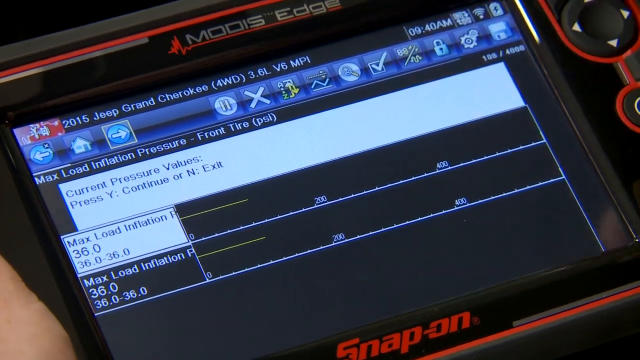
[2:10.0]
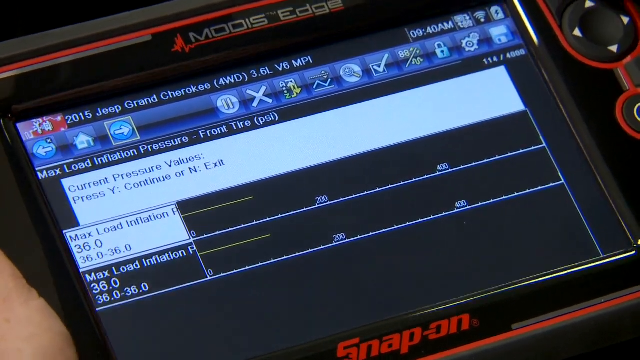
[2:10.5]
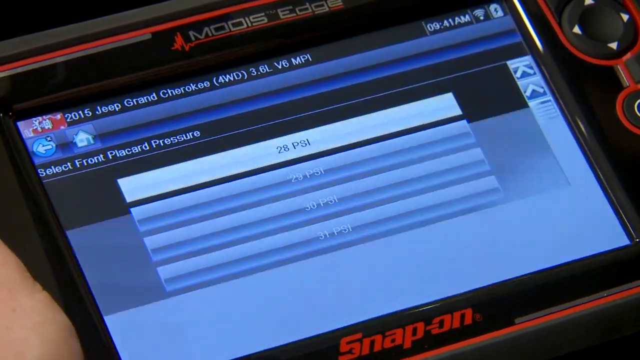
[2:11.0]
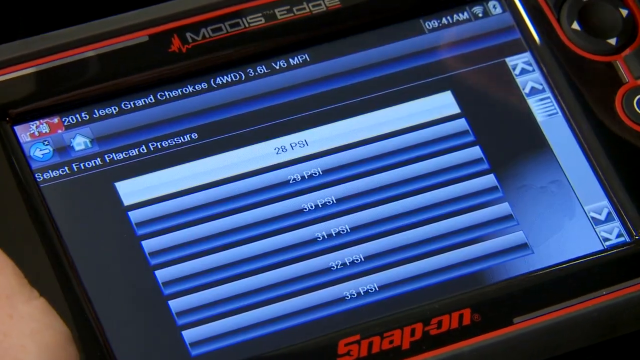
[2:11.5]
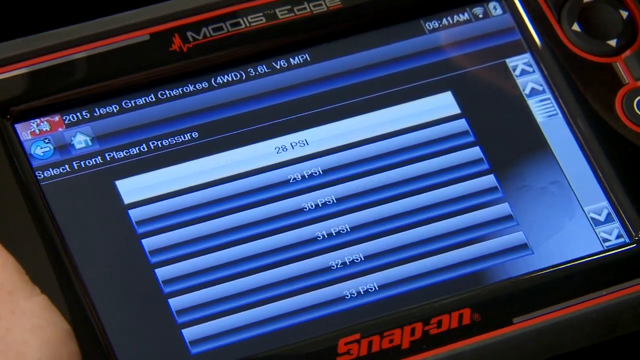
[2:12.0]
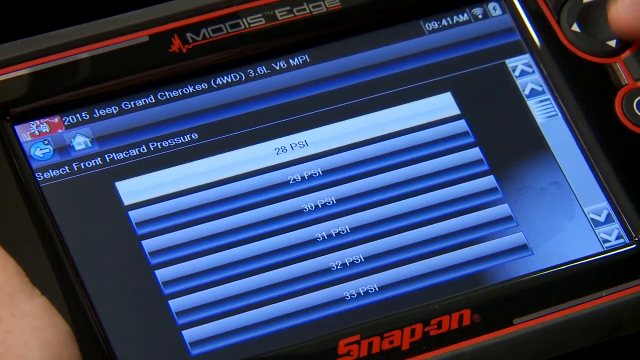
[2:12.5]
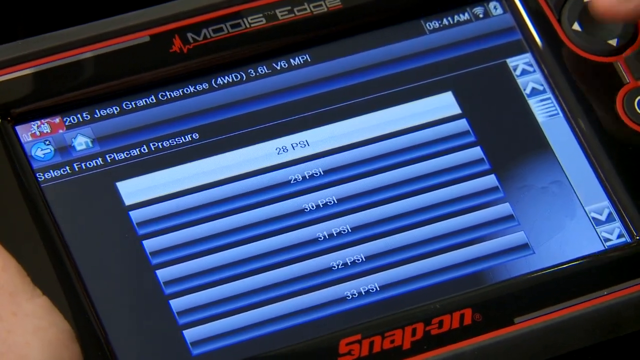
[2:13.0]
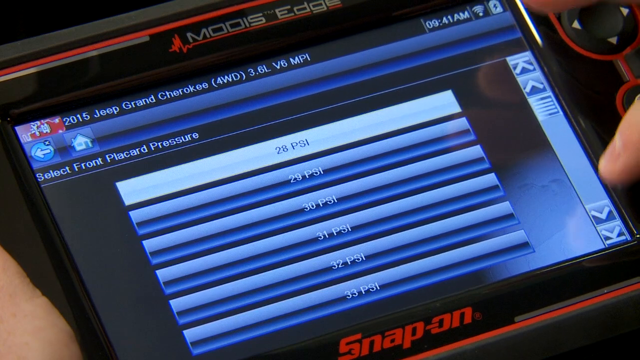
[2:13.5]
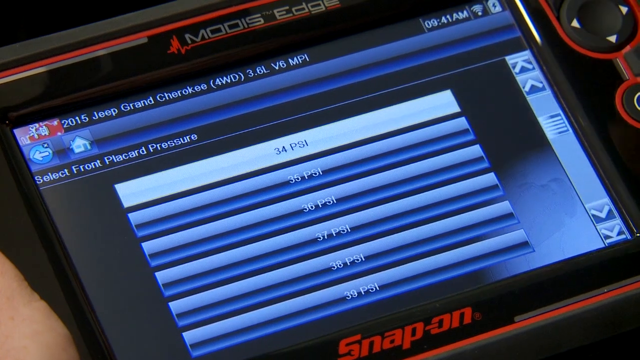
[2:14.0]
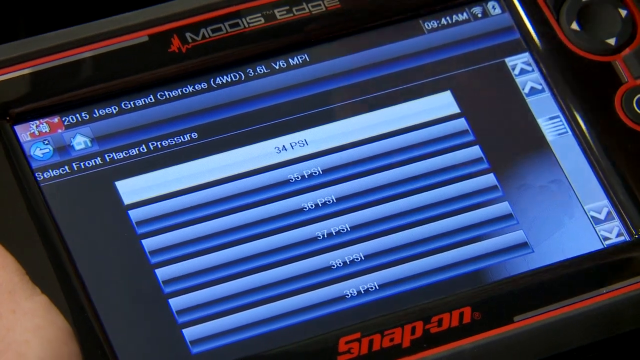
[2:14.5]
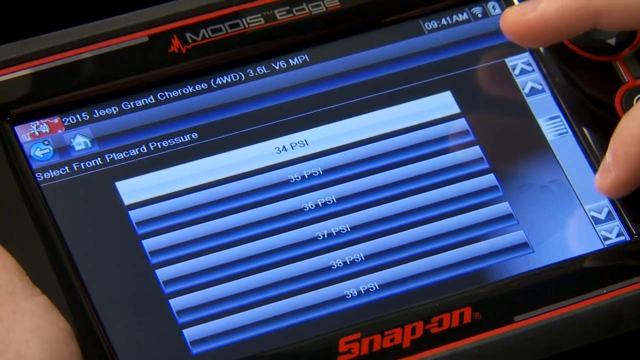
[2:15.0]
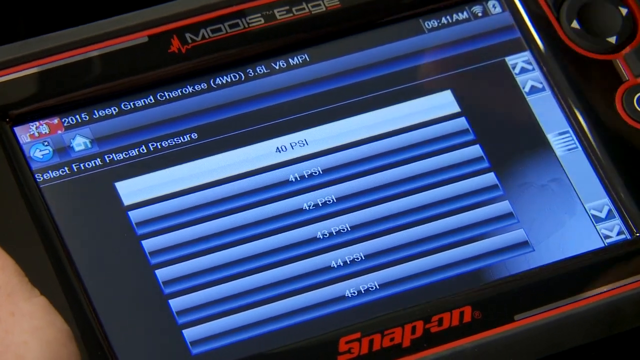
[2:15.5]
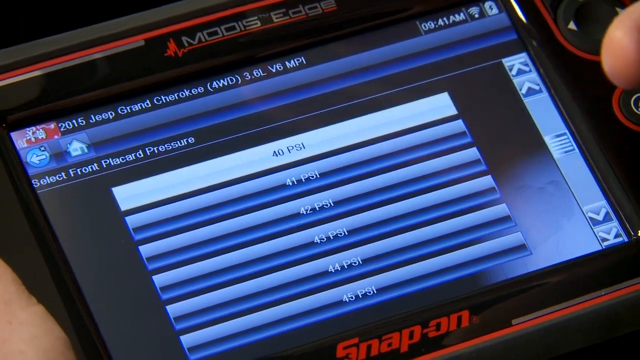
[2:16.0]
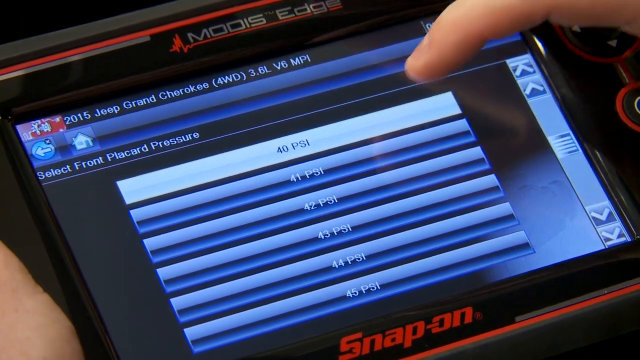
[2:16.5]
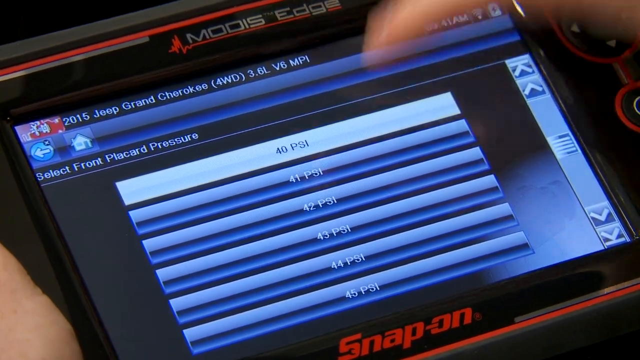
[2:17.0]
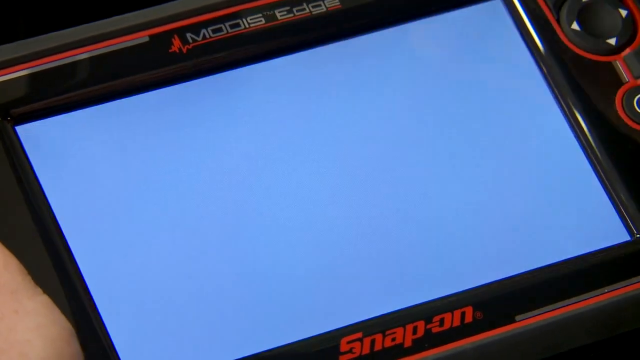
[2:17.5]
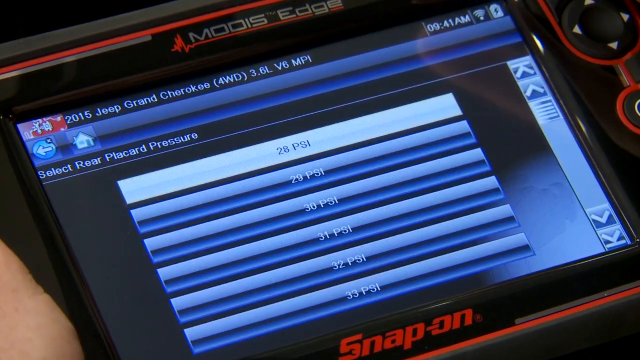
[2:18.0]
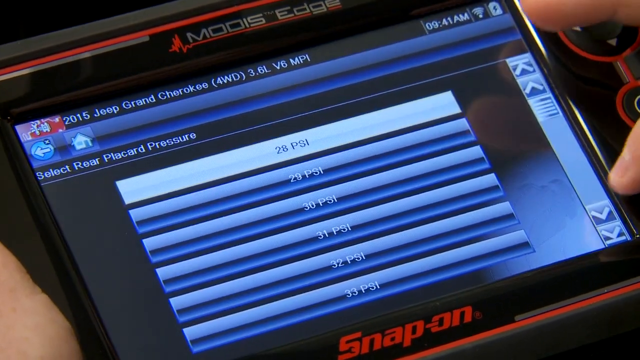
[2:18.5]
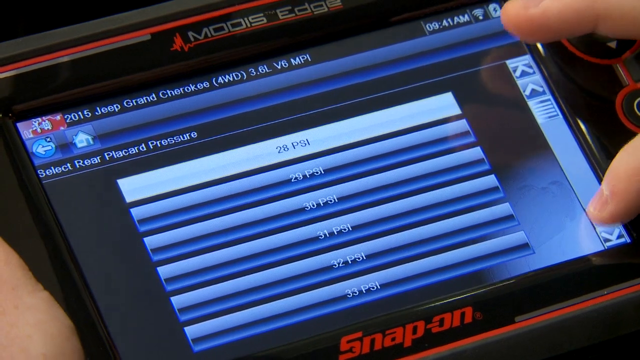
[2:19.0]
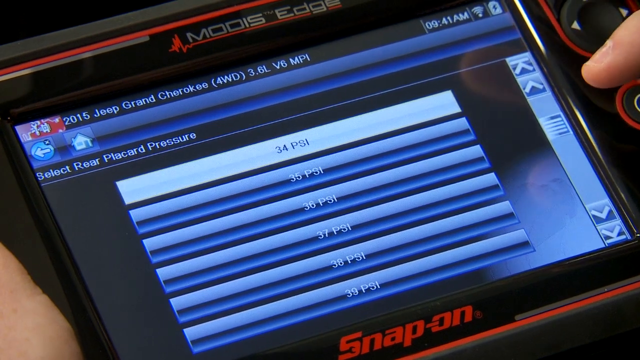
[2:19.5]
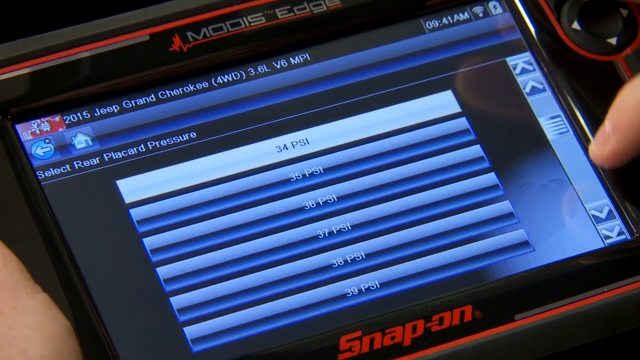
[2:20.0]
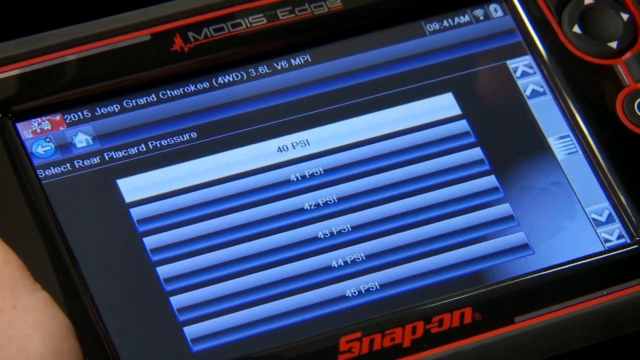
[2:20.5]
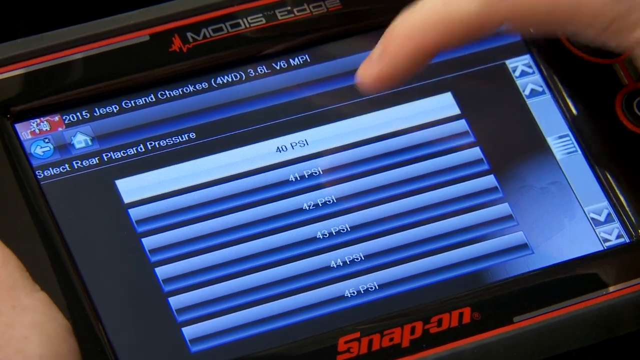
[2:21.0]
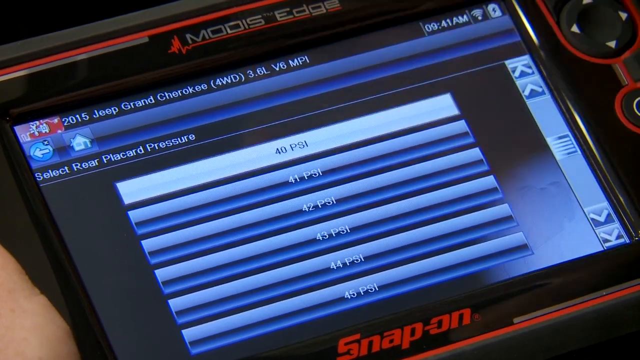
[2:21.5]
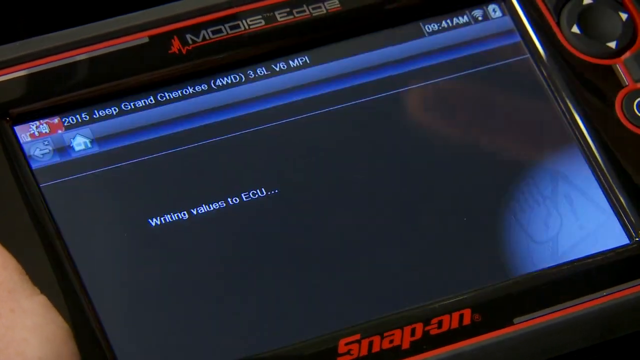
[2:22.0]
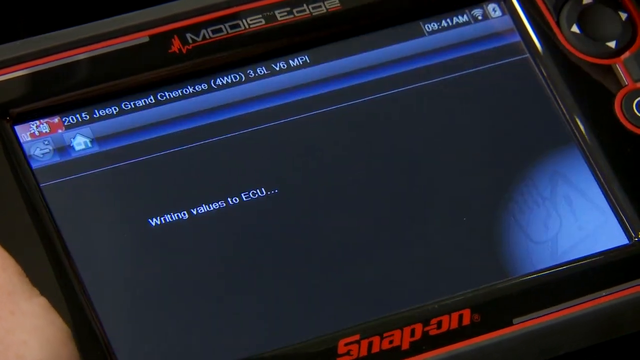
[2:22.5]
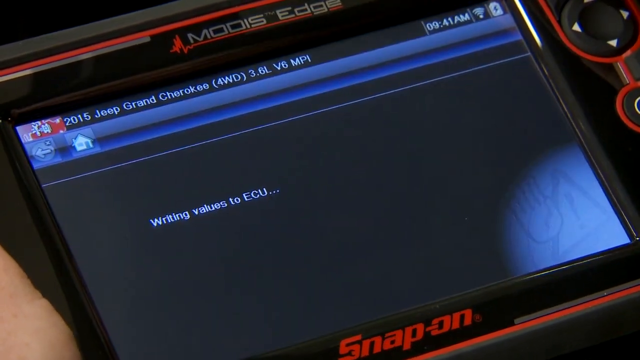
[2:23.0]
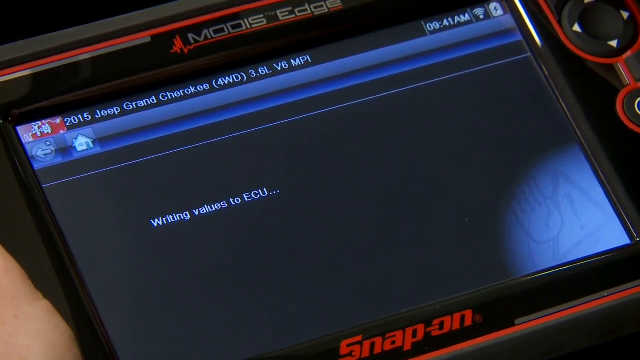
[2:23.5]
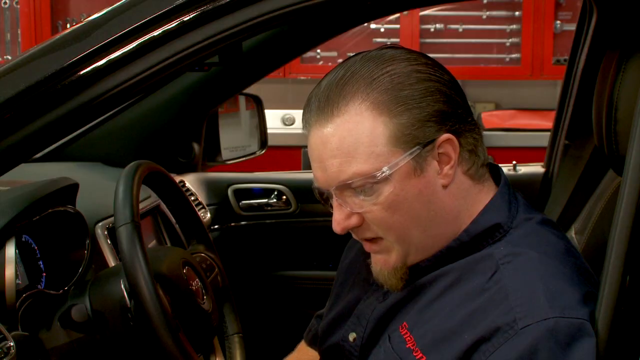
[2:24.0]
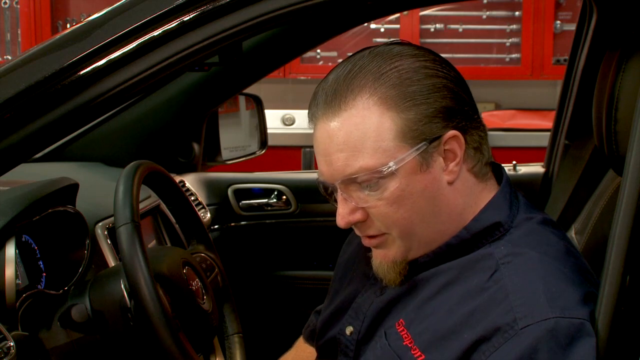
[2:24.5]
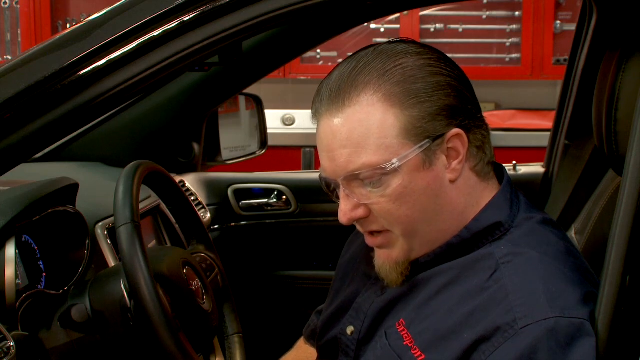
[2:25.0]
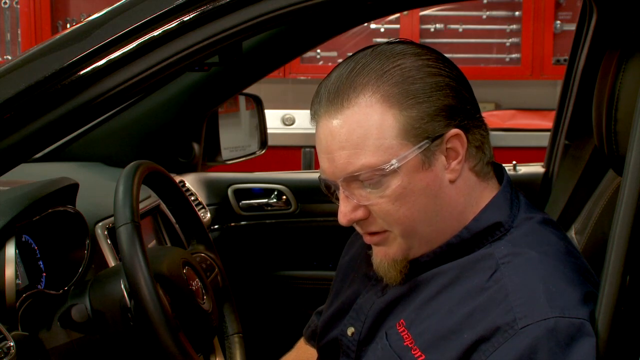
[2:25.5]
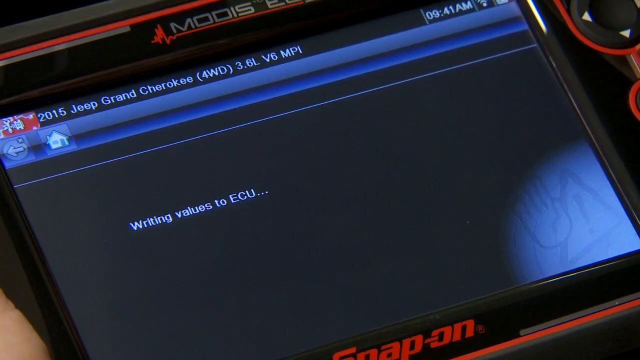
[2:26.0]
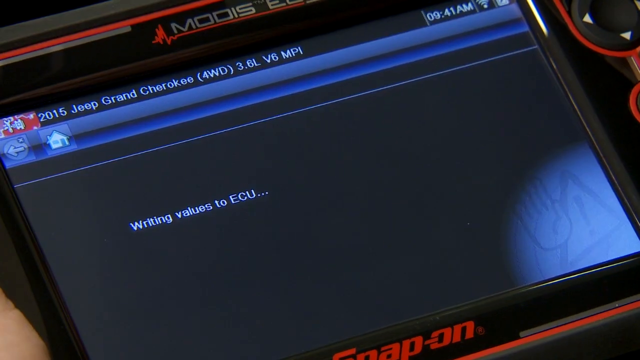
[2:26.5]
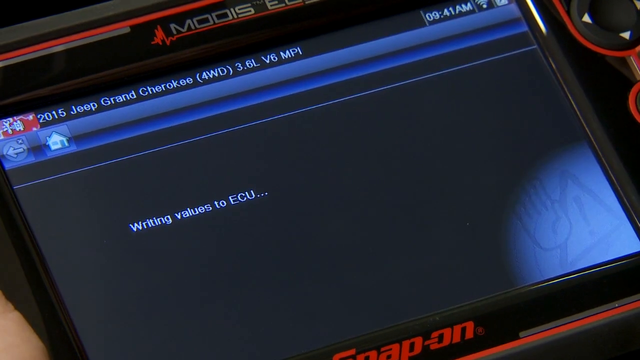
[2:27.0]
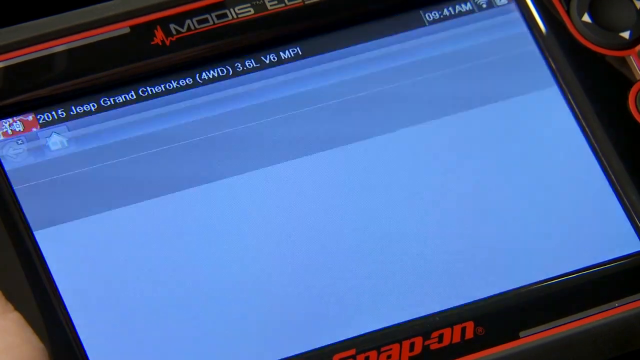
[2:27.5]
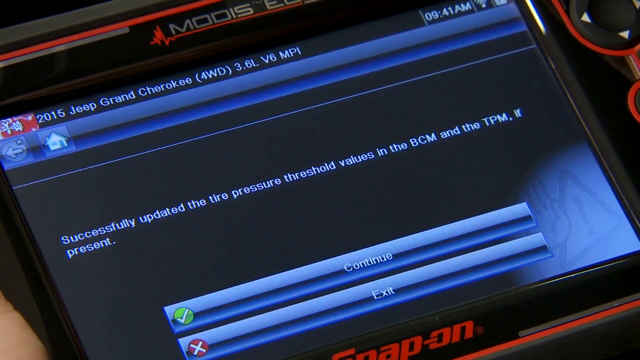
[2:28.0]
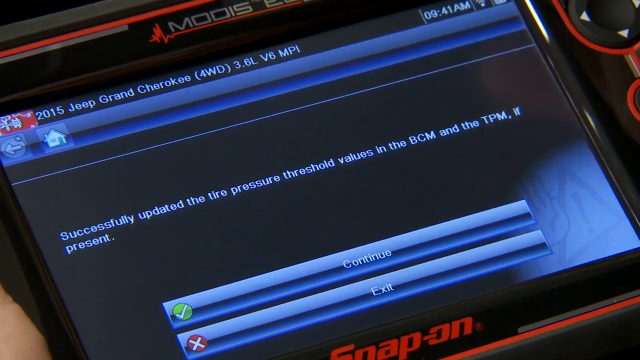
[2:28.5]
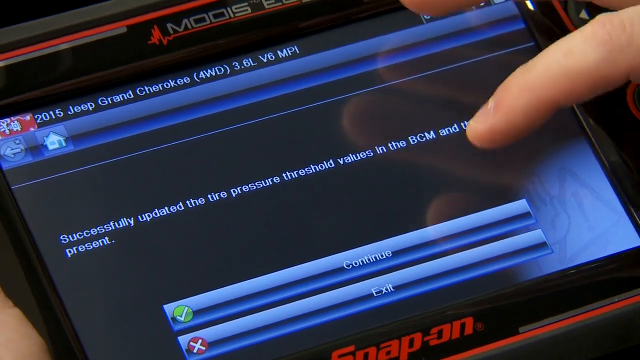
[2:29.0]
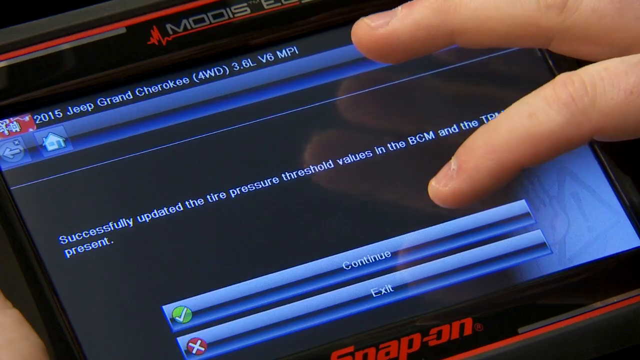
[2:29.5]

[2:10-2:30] He moves to the next screen, titled "select front placard pressure", which lists PSI values including 28, 29, 30, 31, 32 and 33. He scrolls down through the 40s and selects 40, then does the same for the rear, also selecting 40. The device shows it is writing values to the ECU, then a screen reads "successfully updated the tyre pressure threshold values in the BCM," with his finger covering part of it, followed by "and TPM." The data screen with the pressure readings then appears again. The video also cuts to his face as he explains something.